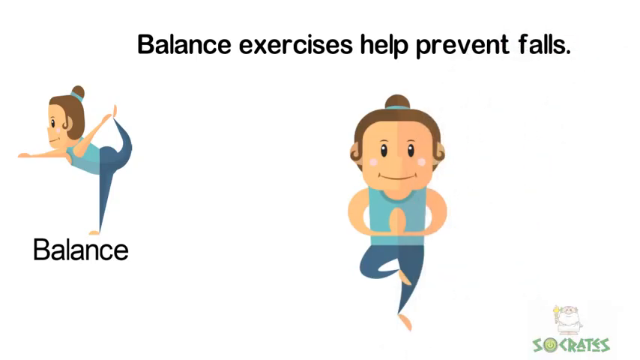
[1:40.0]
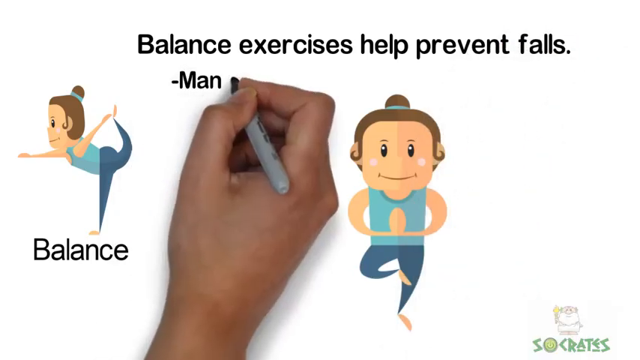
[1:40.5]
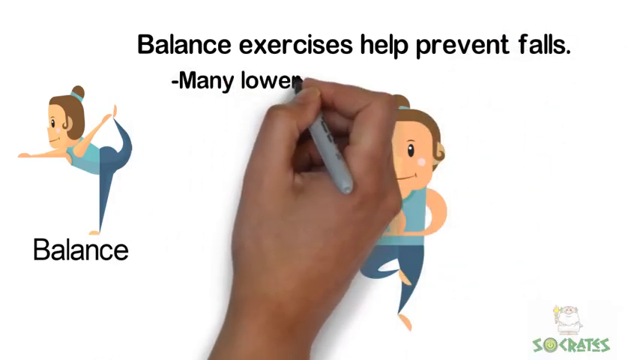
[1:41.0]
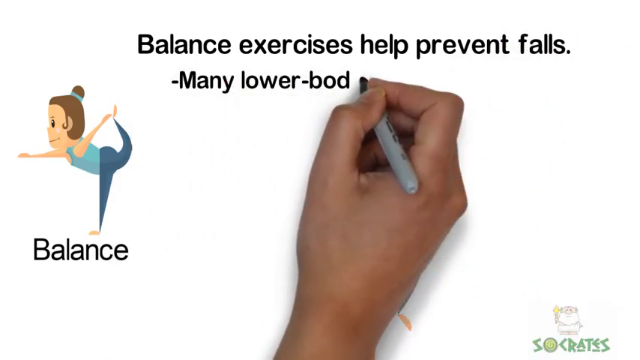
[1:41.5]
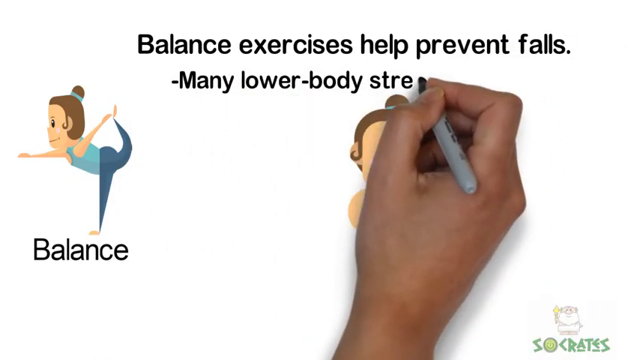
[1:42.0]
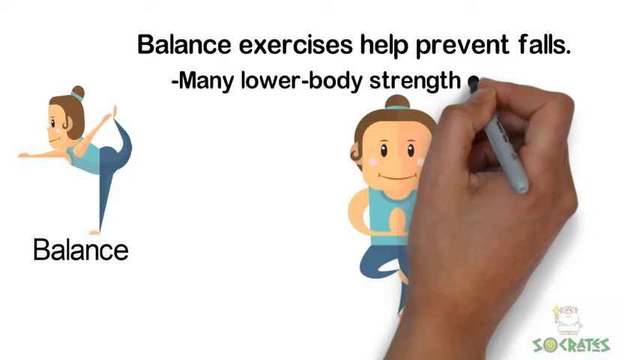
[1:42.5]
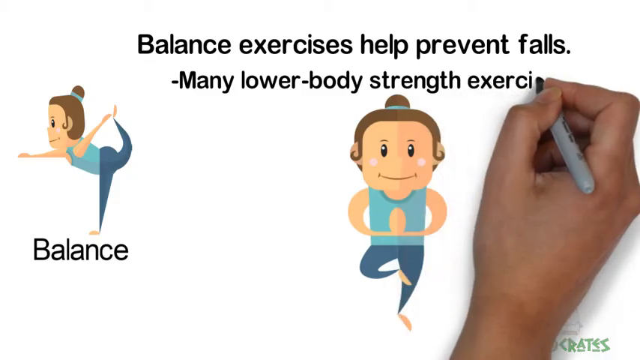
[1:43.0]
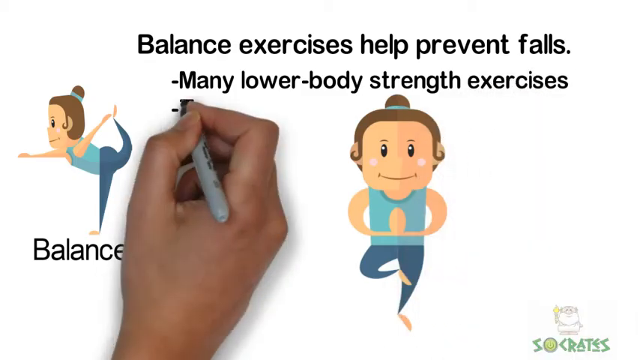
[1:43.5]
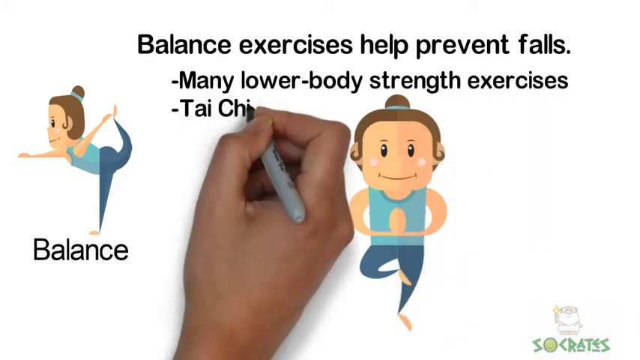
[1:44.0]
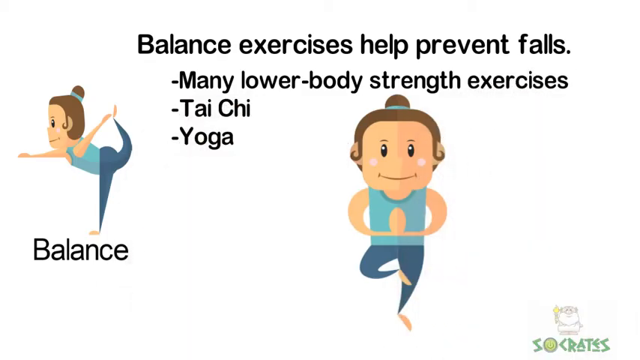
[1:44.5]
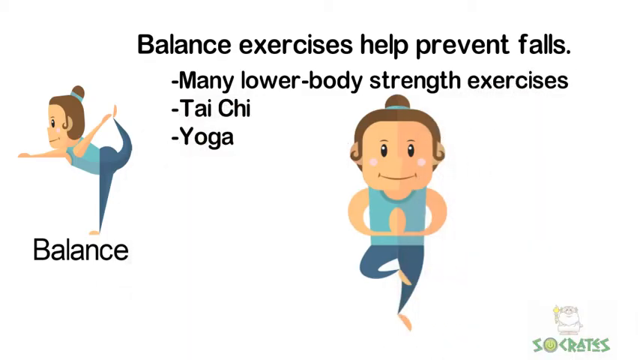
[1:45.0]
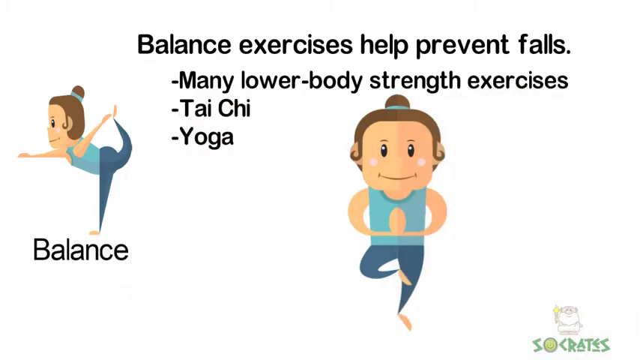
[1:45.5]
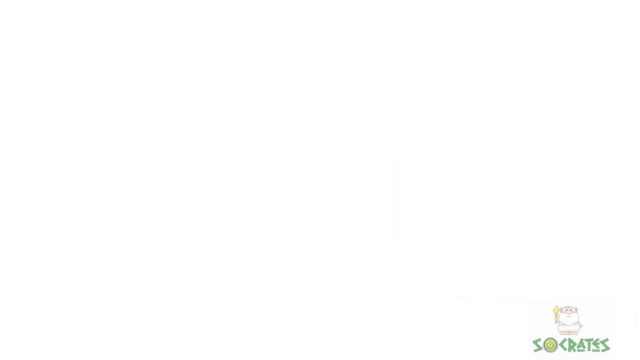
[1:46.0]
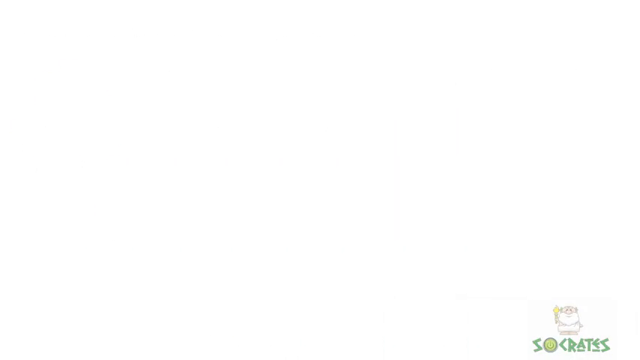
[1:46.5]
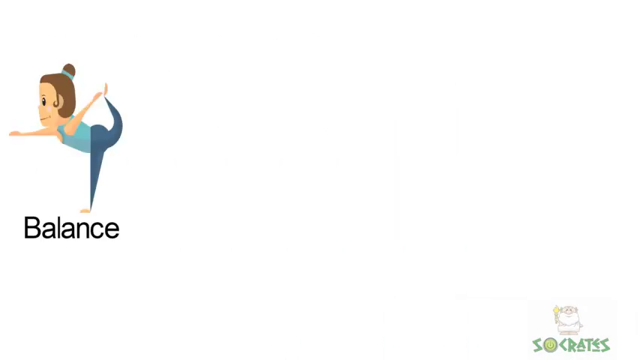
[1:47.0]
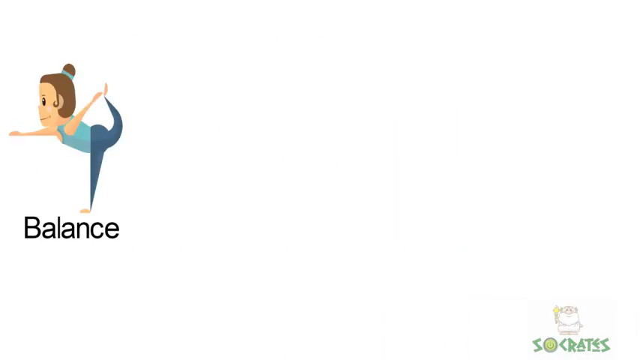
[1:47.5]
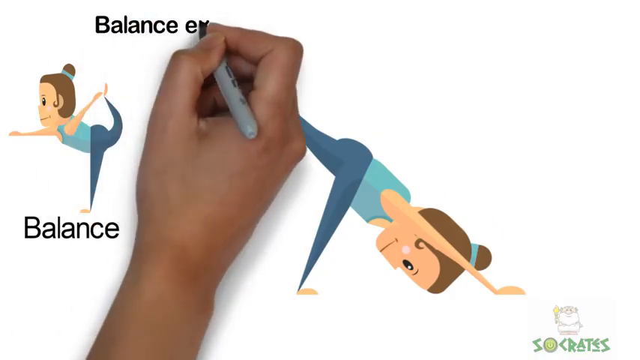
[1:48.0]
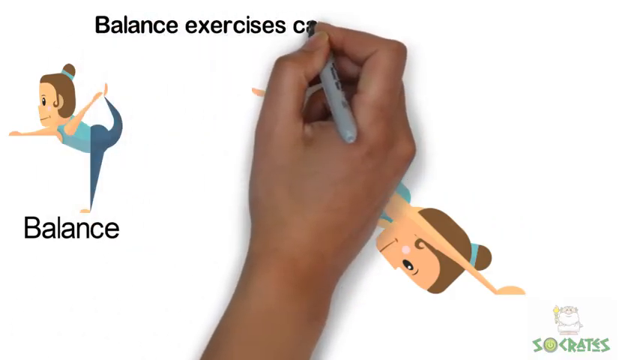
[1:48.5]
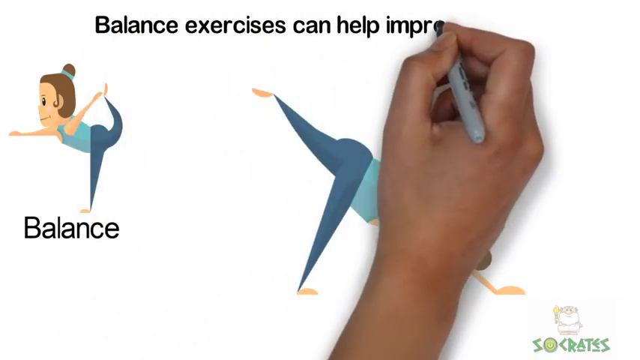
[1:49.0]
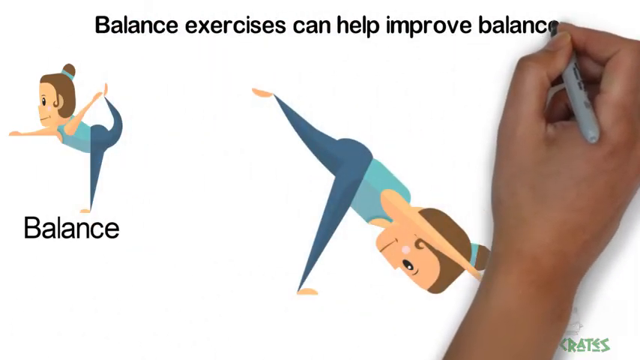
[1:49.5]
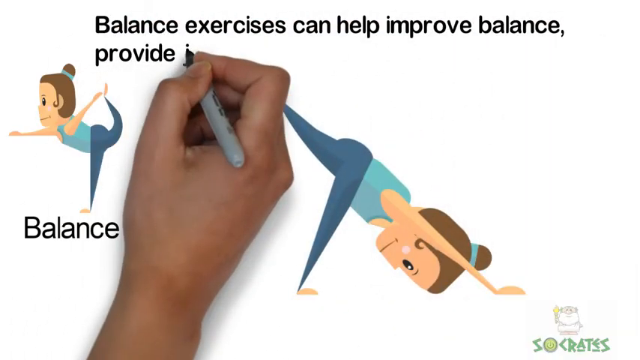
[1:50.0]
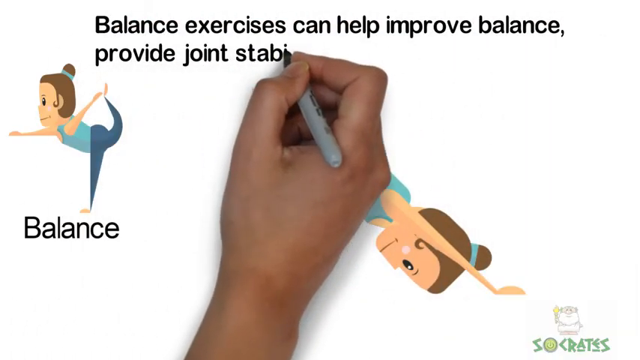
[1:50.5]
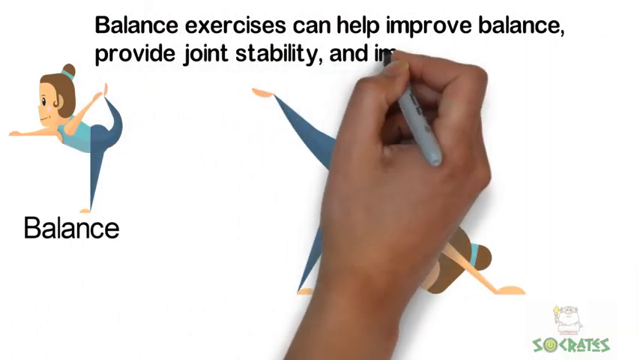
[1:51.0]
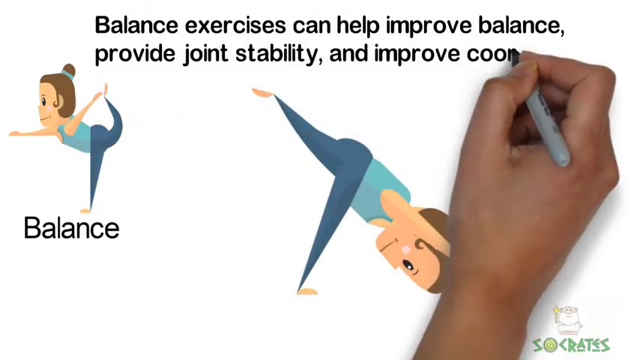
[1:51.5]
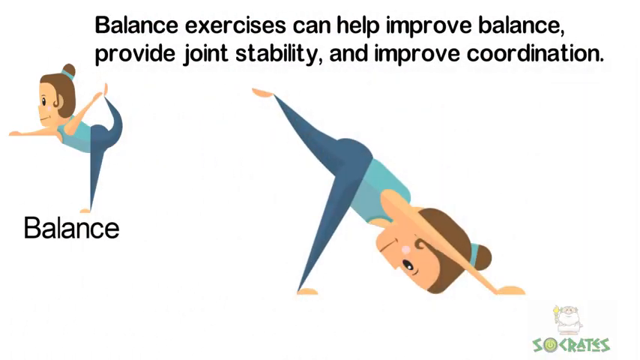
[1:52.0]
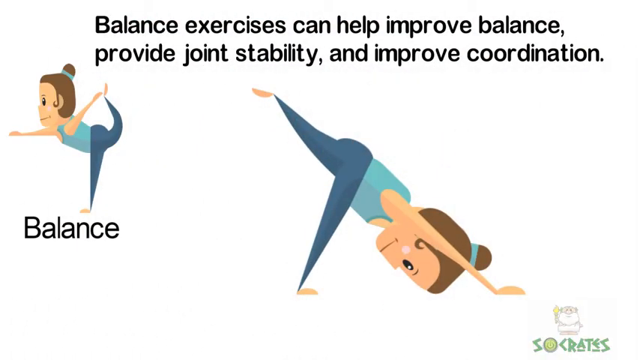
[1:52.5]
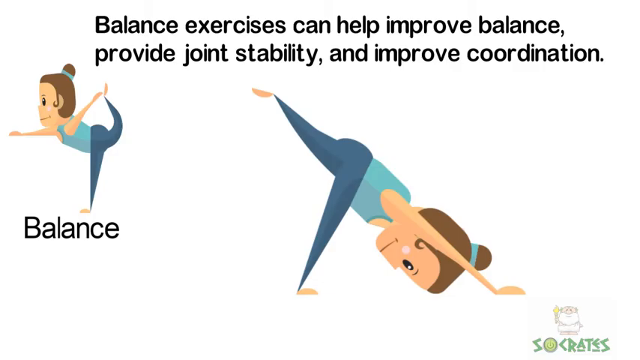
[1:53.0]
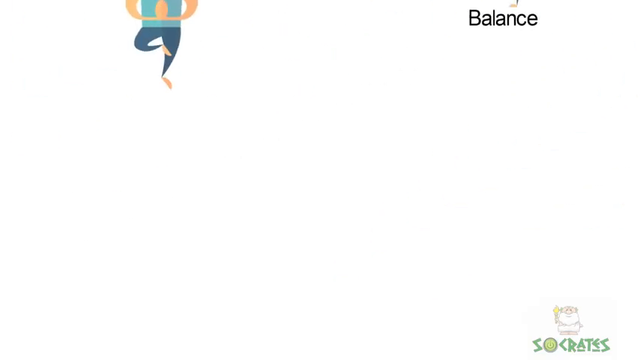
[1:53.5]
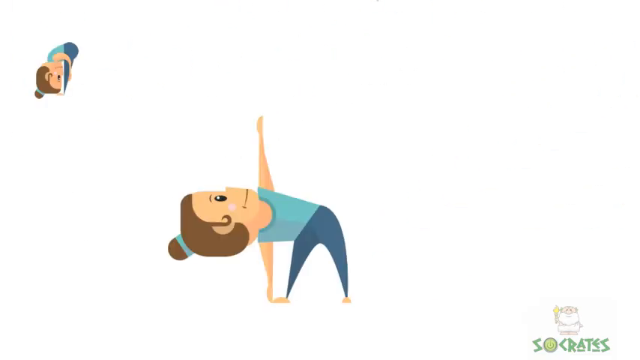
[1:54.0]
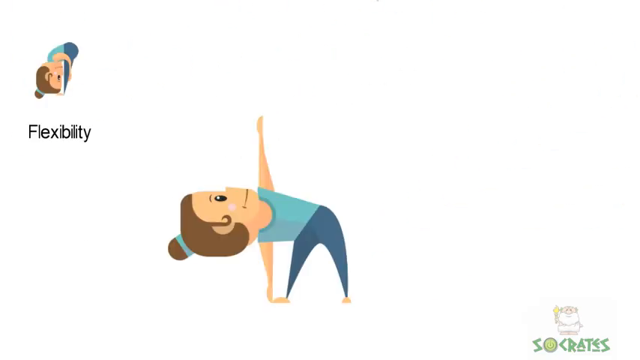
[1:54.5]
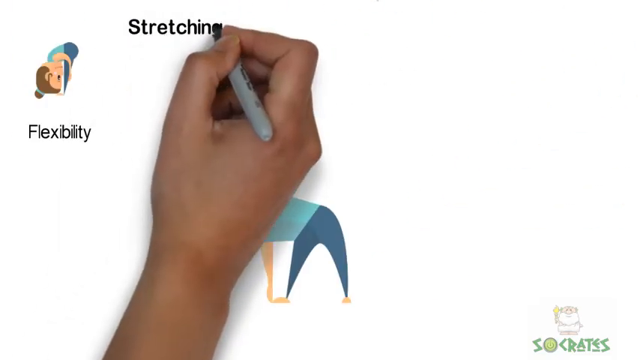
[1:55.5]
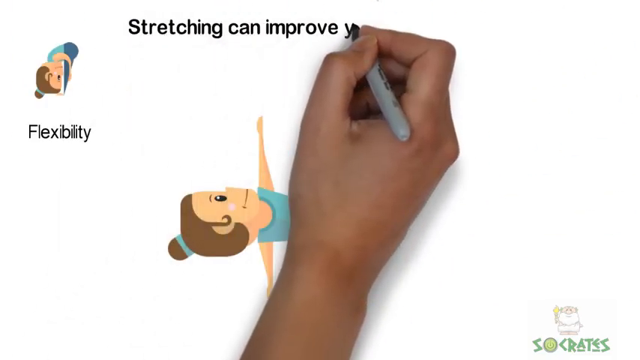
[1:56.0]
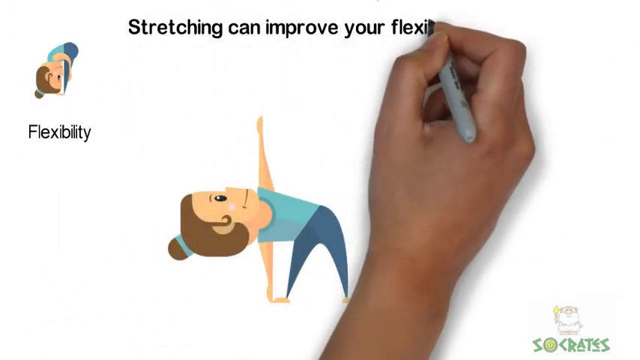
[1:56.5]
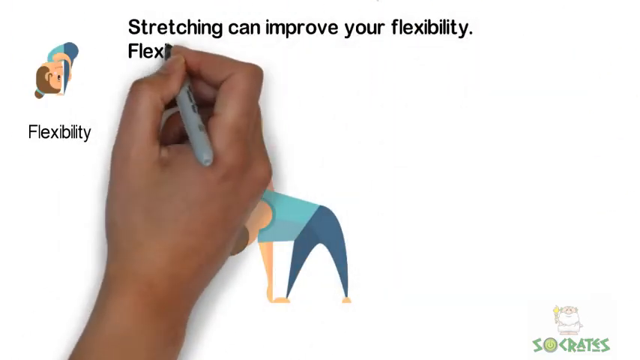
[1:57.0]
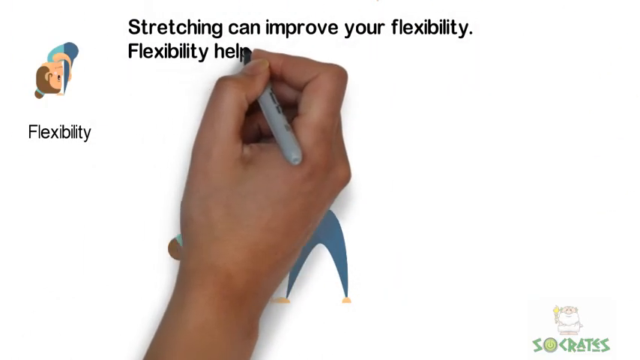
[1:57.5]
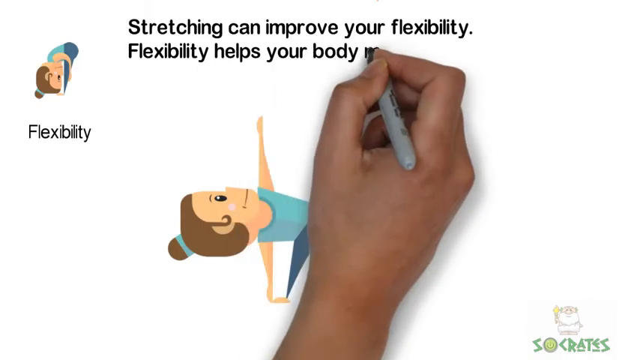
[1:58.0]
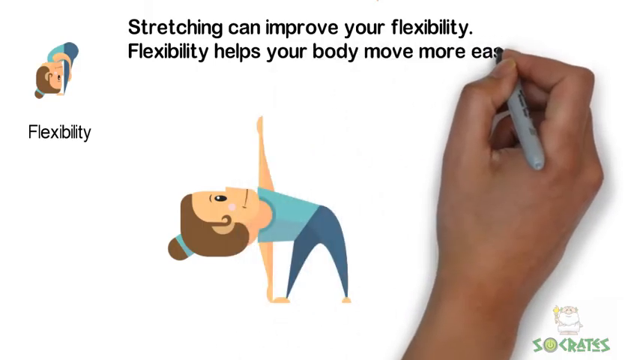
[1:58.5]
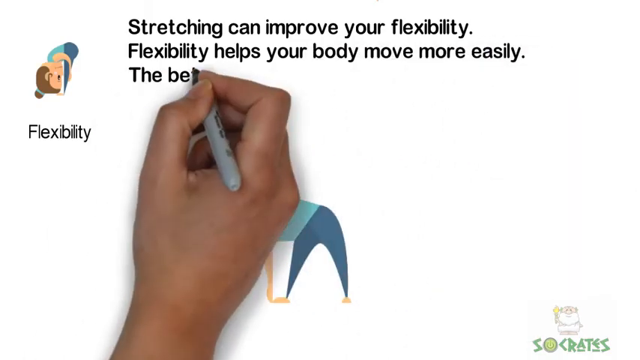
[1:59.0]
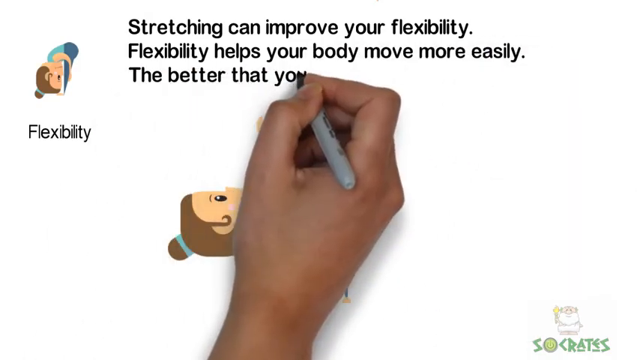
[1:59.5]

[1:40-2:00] Black text along the top of the white screen reads "balance exercises help prevent falls." A hand holding a gray marker with a black tip writes underneath it in black, including the words "Tai Chi" and "yoga." Everything disappears, and the hand comes back and writes at the top: "balance exercises can help improve balance provide joint stability and improve coordination." That disappears, and the hand writes in black: "Stretching can improve your flexibility flexibility helps your body move more easily the better that your body moves." Underneath is a cartoon woman in green stretch pants and a turquoise tank top, with brown hair up in a ponytail. She faces to her right with only one foot on the ground; her other leg is bent up behind her and she grabs it with her left arm while her right arm is out in front of her. The word "balance" is beneath her.